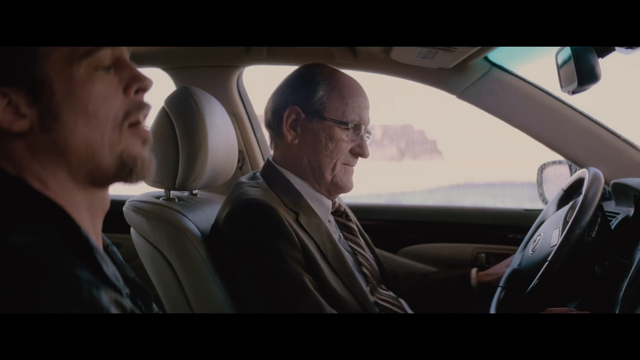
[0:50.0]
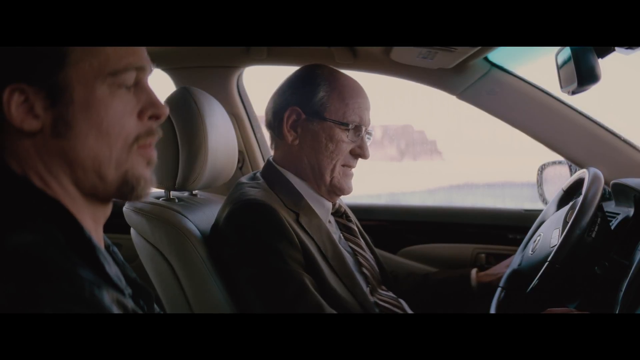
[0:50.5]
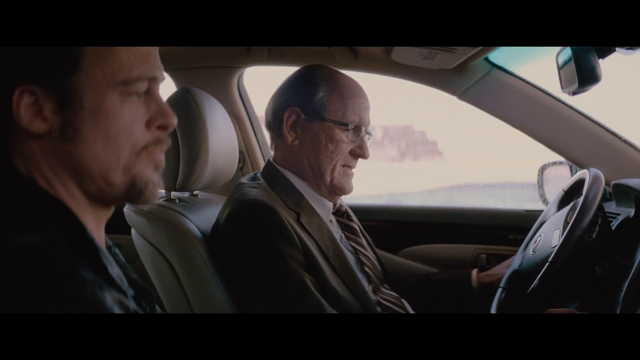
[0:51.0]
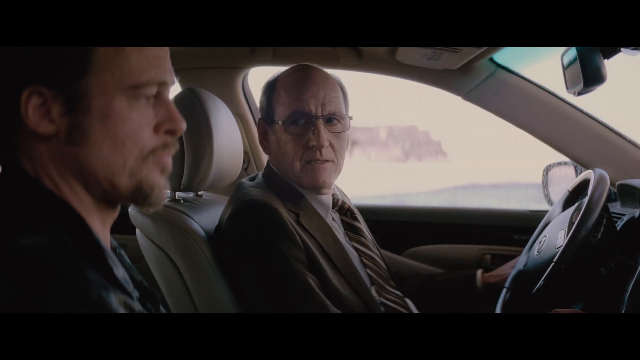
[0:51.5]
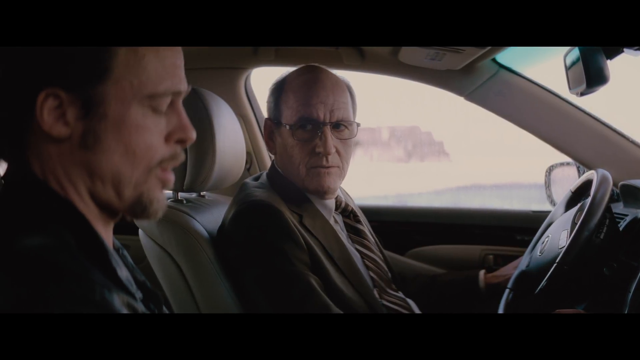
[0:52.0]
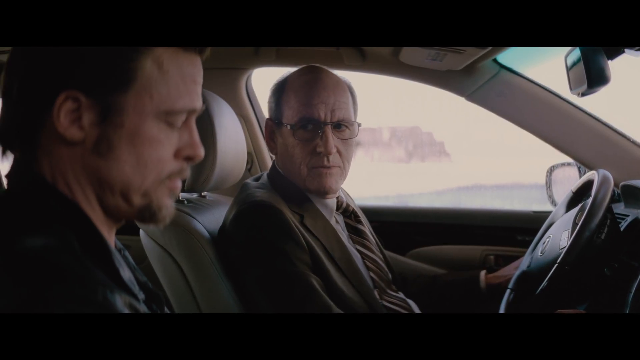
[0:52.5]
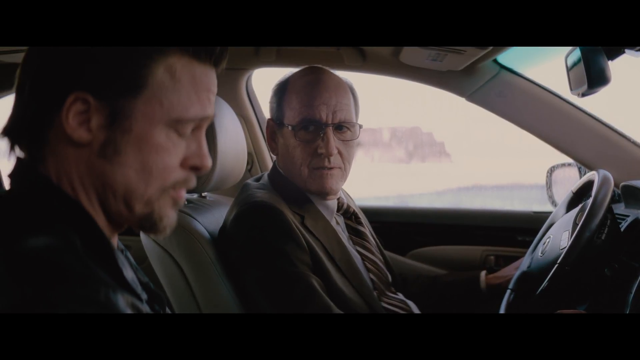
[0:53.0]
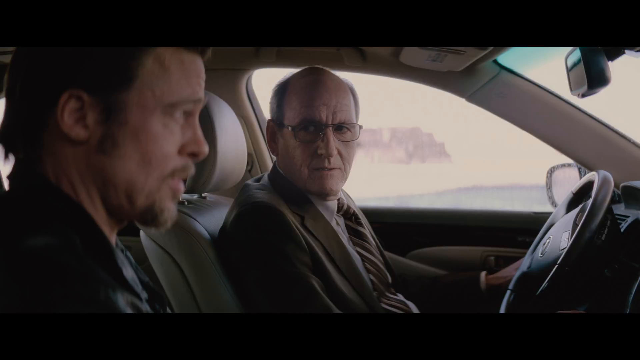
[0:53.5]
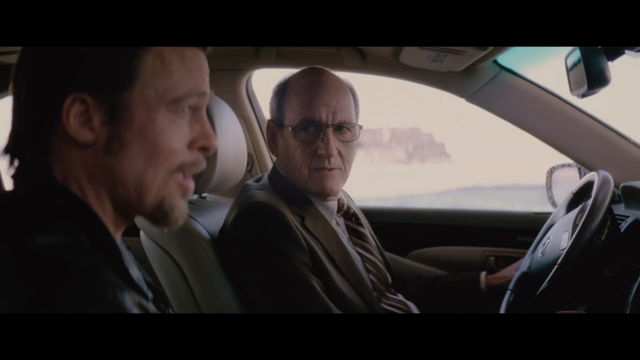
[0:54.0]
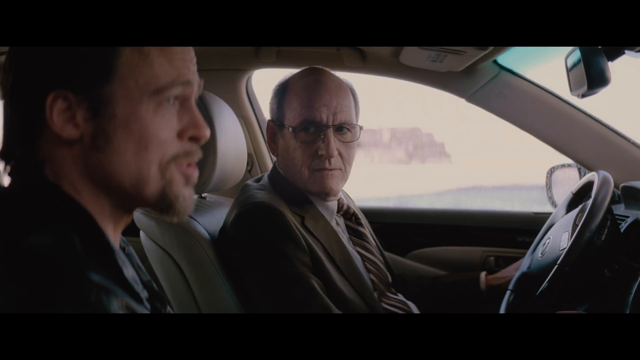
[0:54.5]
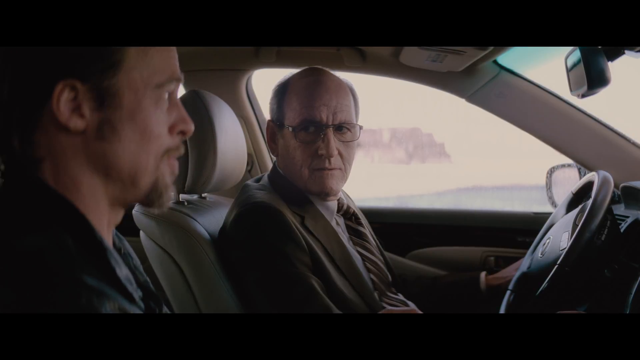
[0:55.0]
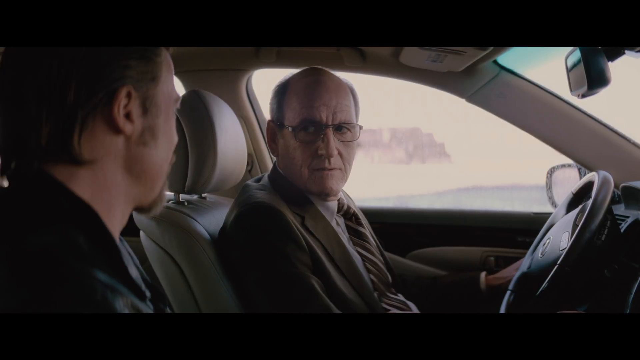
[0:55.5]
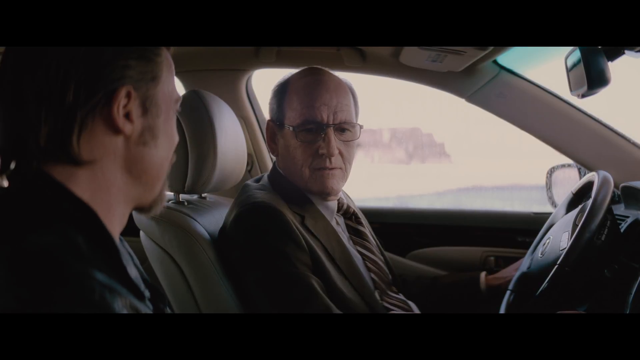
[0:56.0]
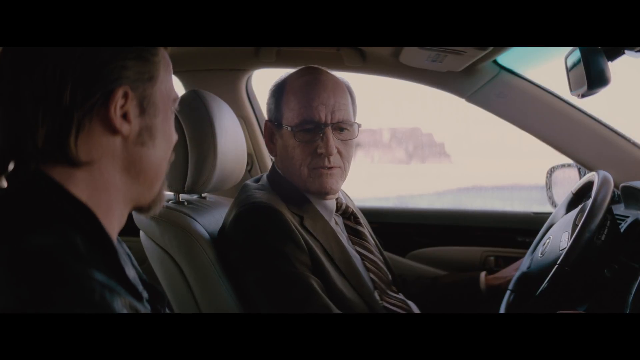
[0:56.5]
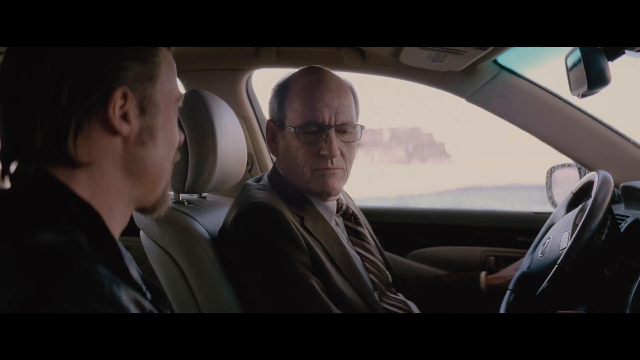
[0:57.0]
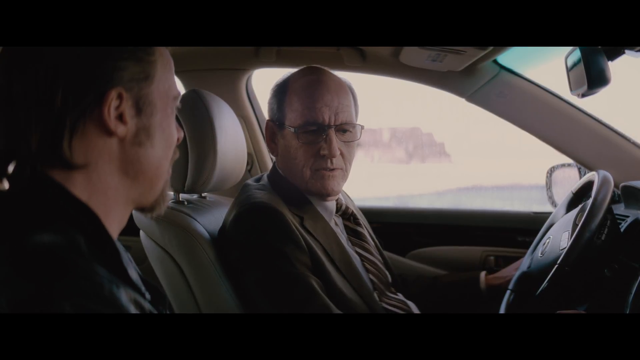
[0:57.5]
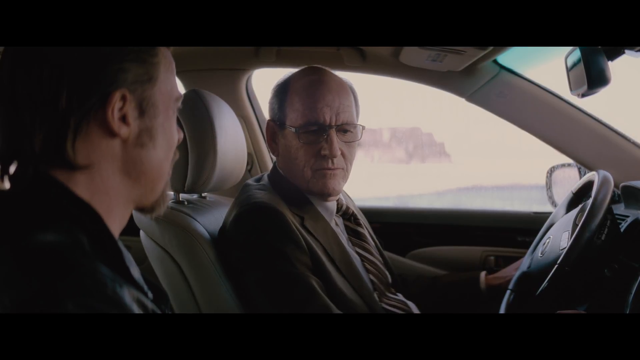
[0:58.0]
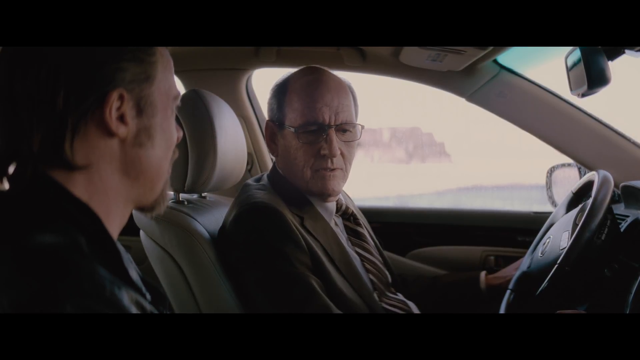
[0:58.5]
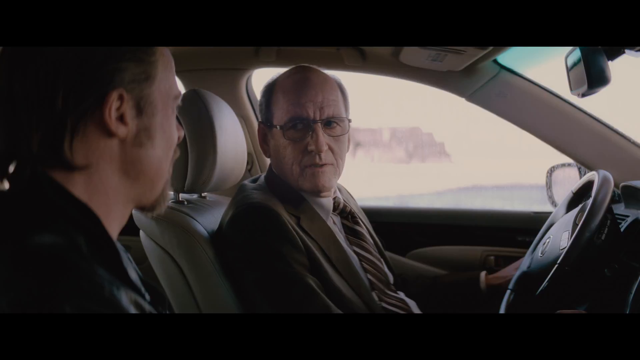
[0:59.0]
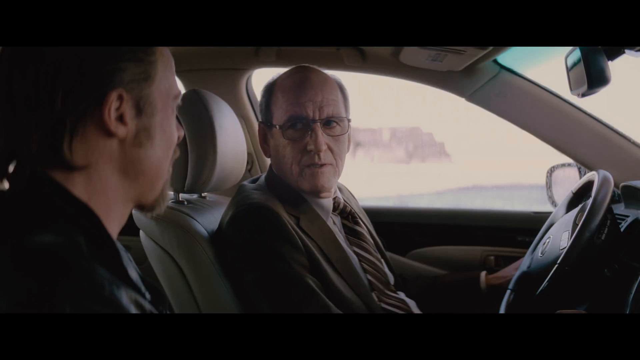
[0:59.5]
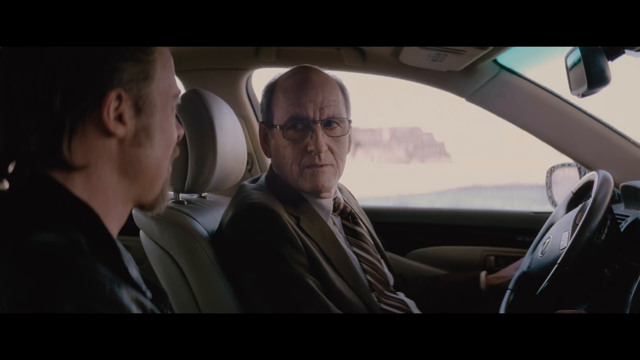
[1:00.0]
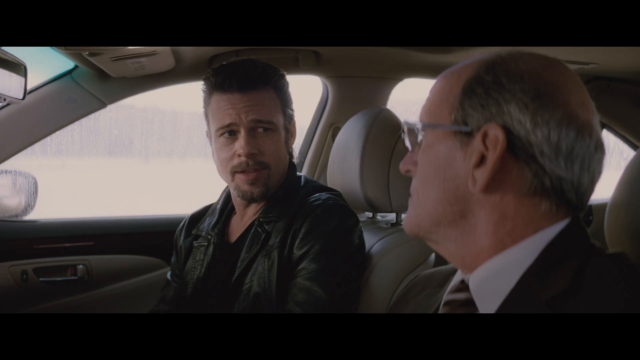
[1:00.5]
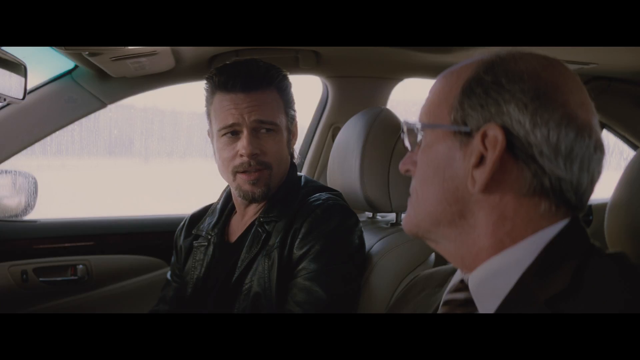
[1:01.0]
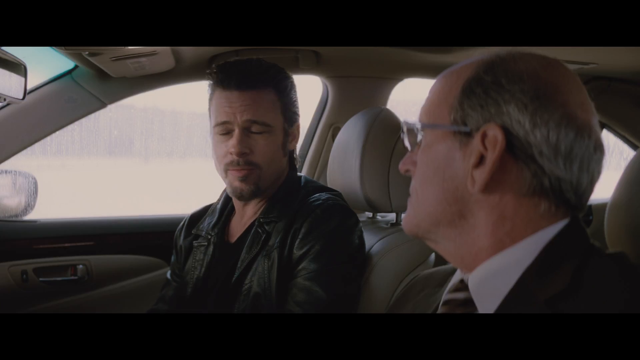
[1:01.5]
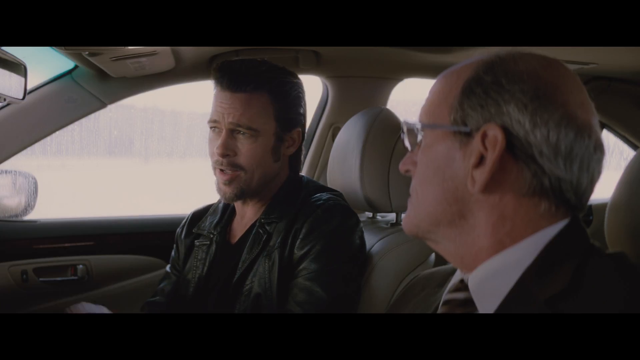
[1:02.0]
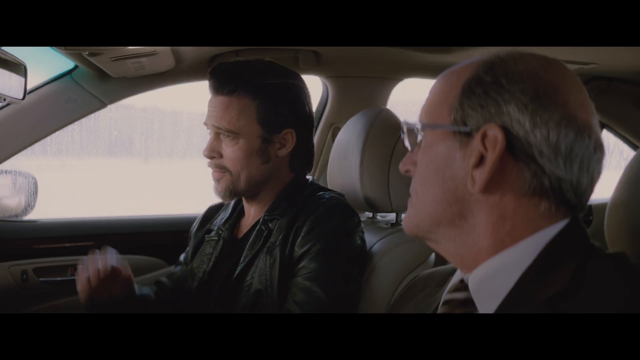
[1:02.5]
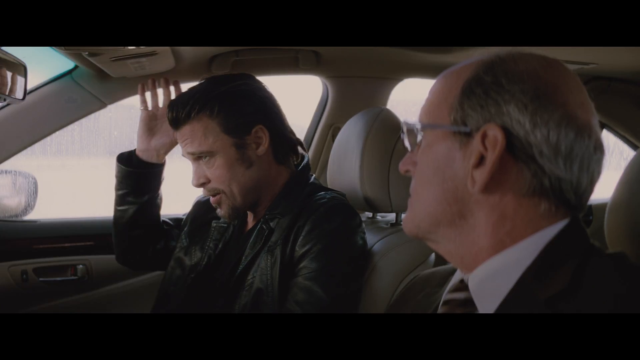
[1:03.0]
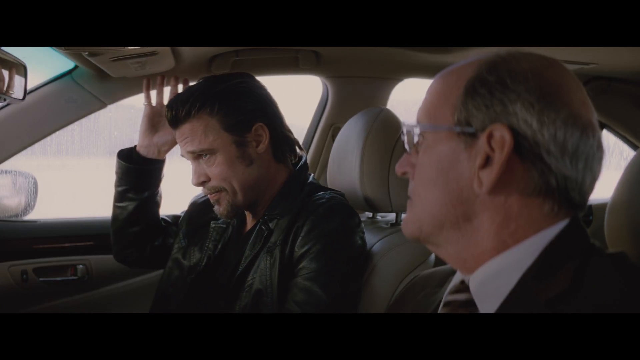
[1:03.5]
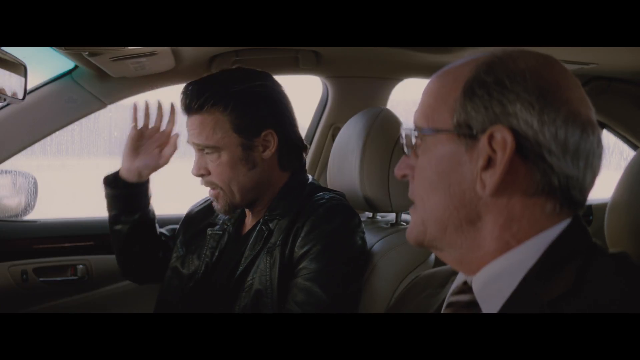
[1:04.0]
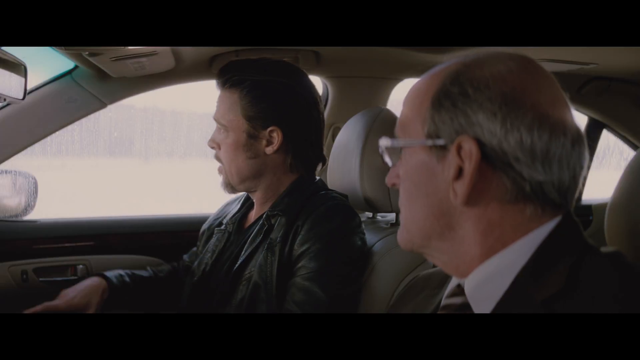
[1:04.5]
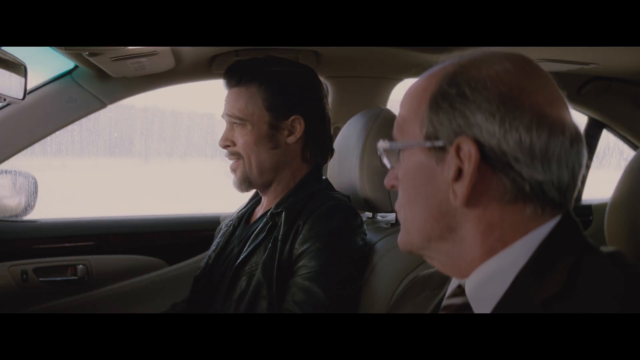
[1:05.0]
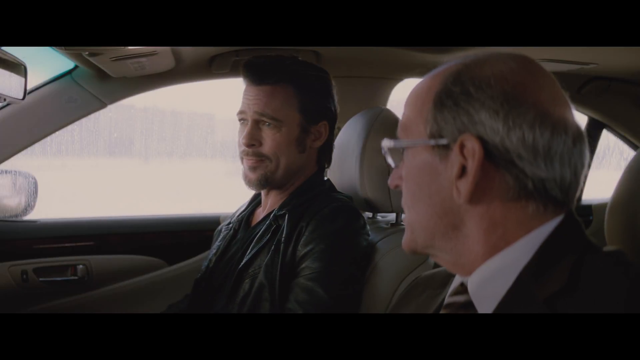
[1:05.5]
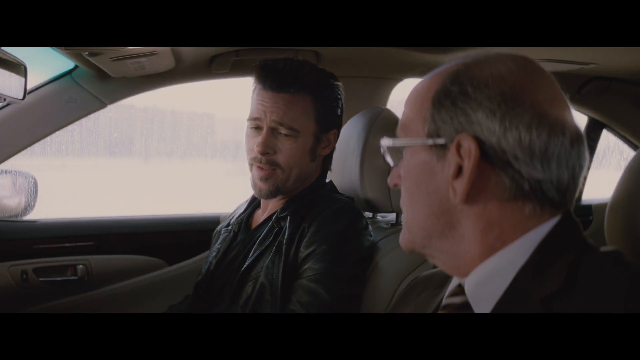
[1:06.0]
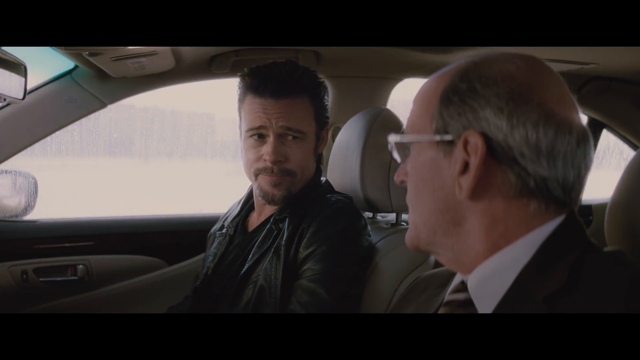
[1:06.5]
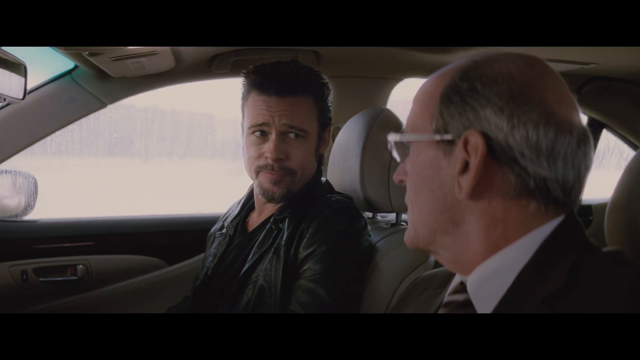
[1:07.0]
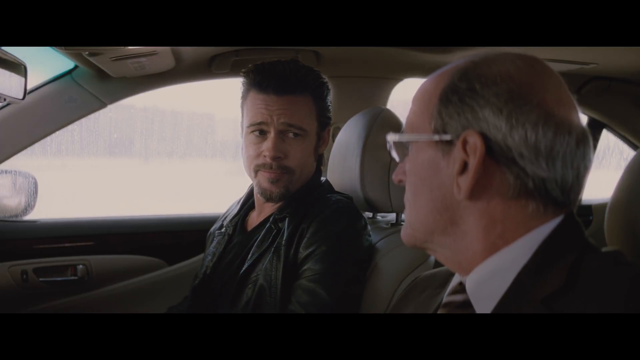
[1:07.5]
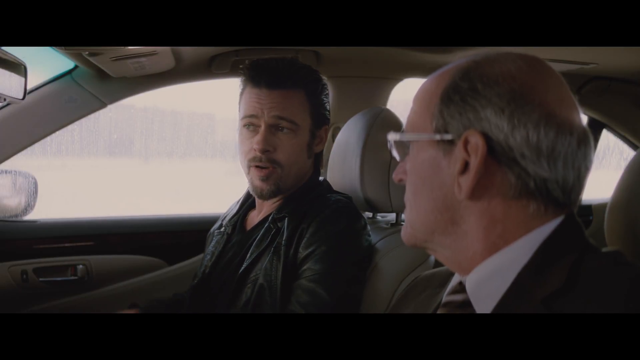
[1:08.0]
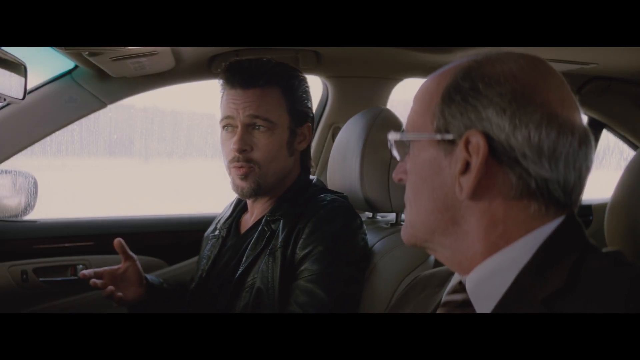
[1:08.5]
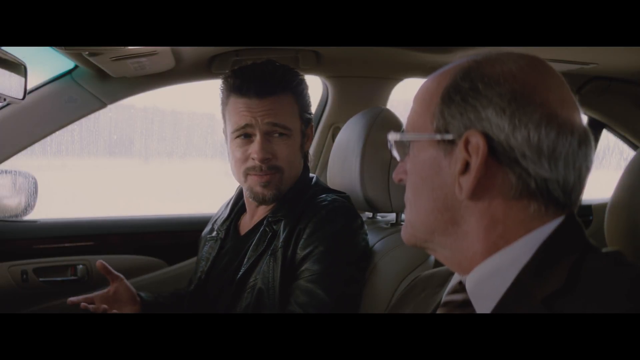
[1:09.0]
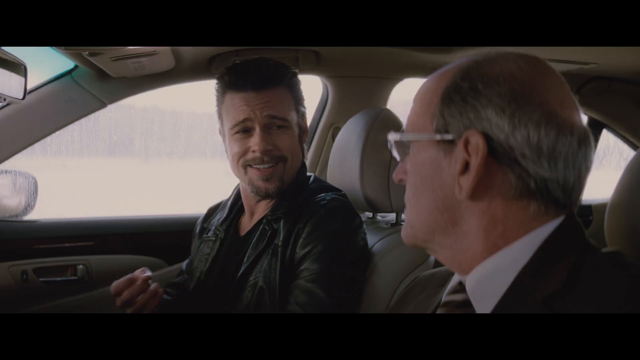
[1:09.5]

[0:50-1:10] Two men in a car are facing somewhat to the right. On the left, Brad Pitt is seen in profile wearing a black jacket. In the driver's seat, with a black steering wheel on the right-hand side, is an older man with glasses, a somewhat balding head, and a suit of some kind. He looks over at Brad Pitt and asks him something; Brad Pitt looks over, and the older man nods. The shot moves to Brad Pitt, whose haircut looks a little like an Elvis Presley haircut. He lifts his right hand toward the ceiling of the car, sort of looks off to the side, then gestures with his right hand as he talks to the other man. The car interior is a beige-like color, the rear view mirror appears in the top right corner of the frame when the shot is on the older man, and outside is very white and blown out, so little can be seen.